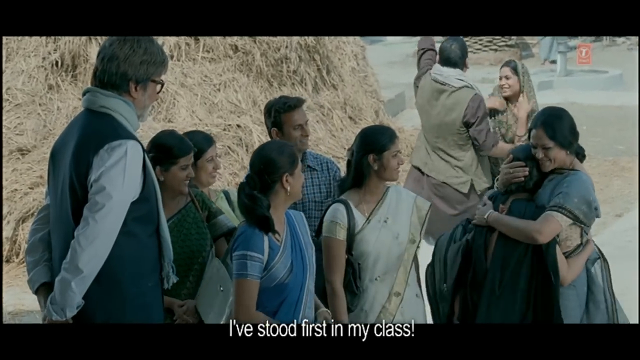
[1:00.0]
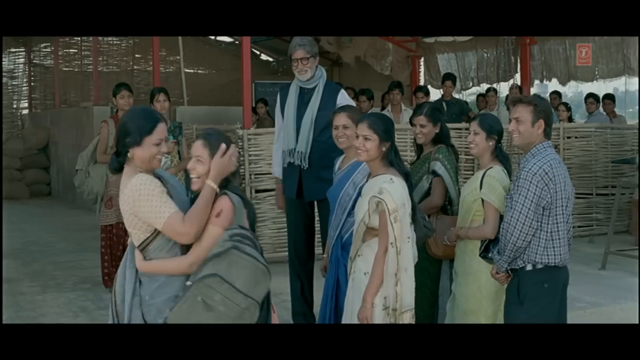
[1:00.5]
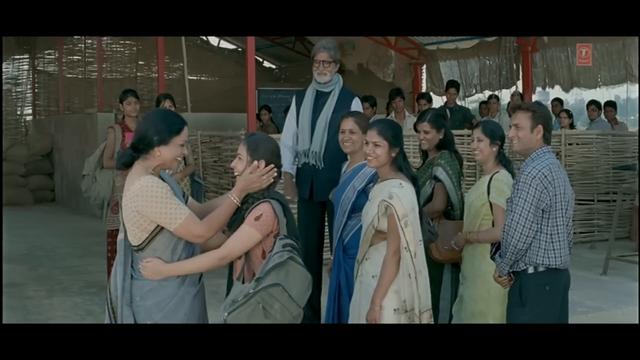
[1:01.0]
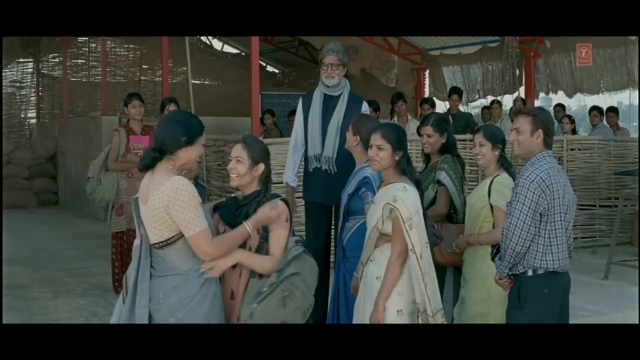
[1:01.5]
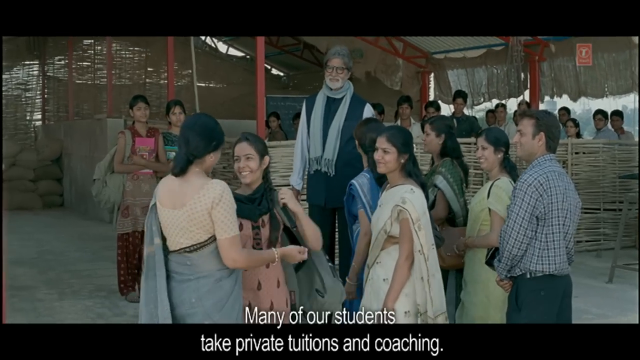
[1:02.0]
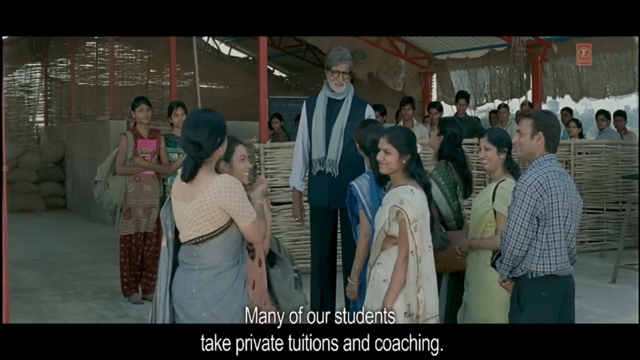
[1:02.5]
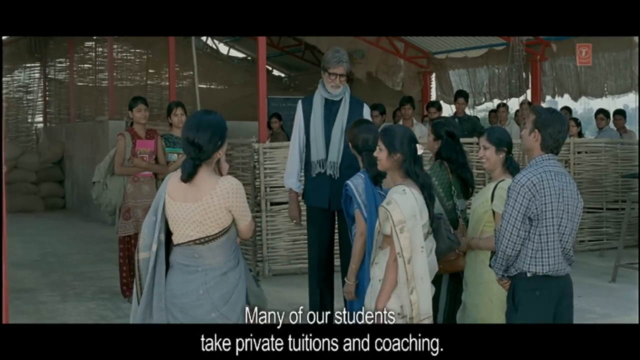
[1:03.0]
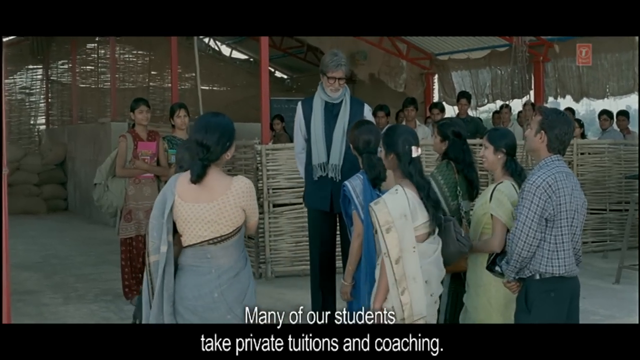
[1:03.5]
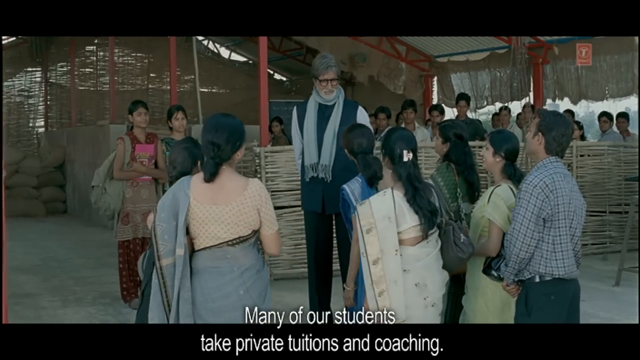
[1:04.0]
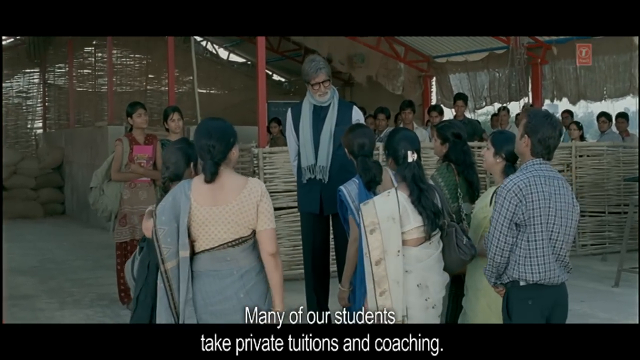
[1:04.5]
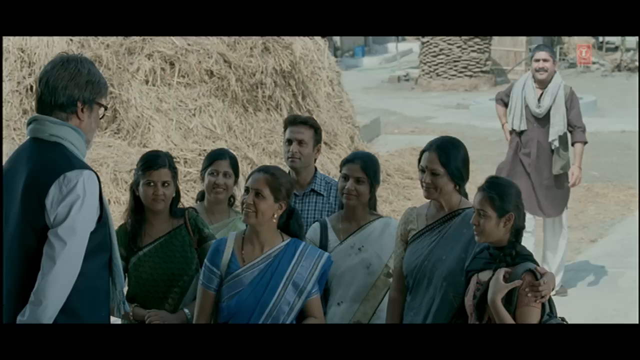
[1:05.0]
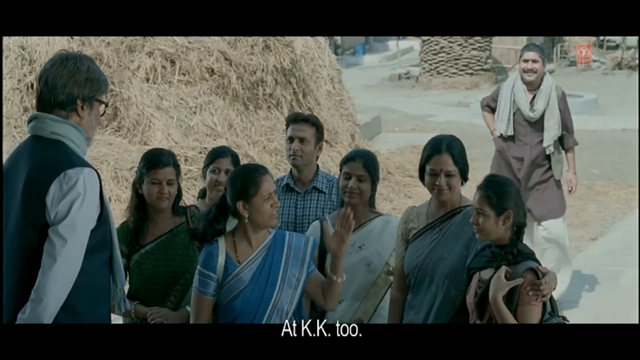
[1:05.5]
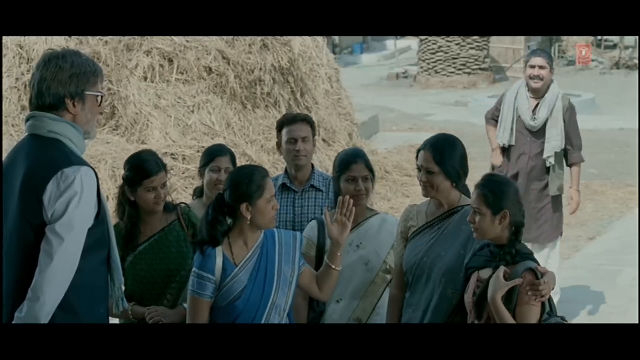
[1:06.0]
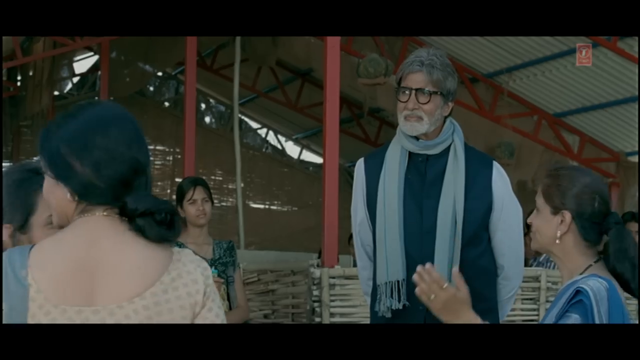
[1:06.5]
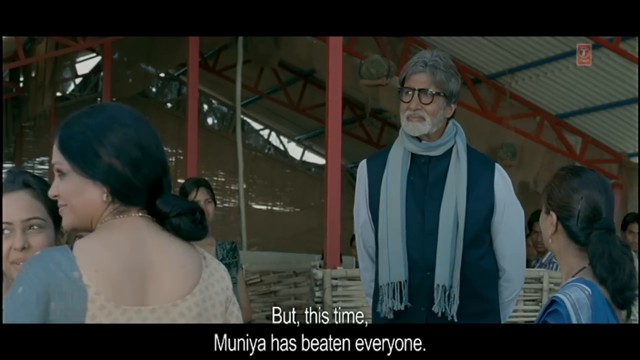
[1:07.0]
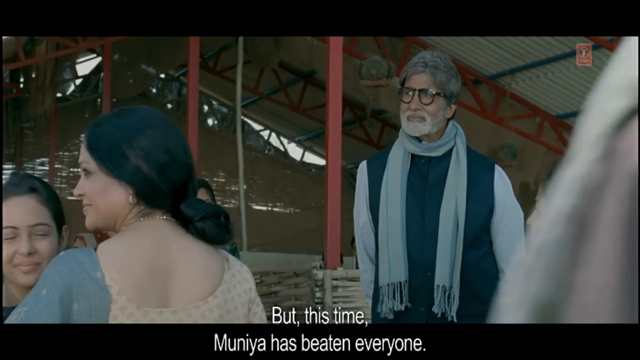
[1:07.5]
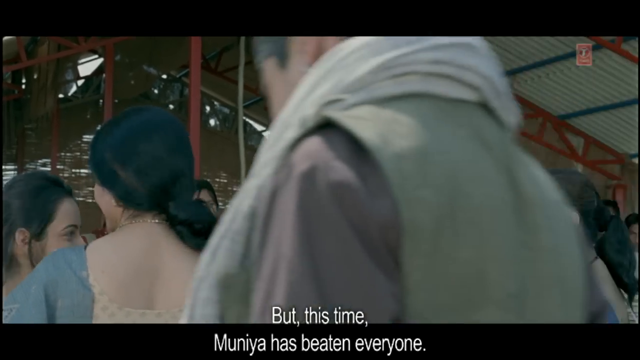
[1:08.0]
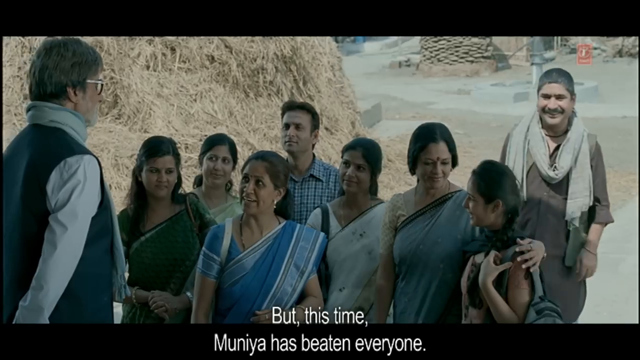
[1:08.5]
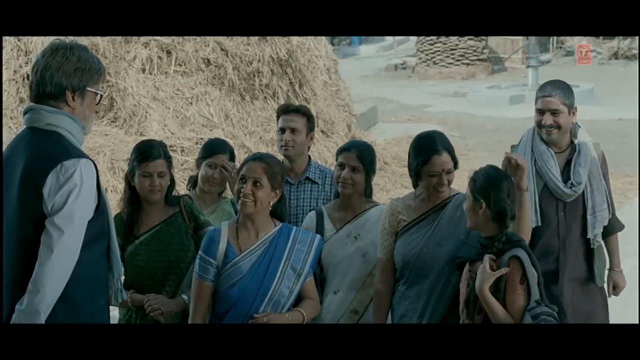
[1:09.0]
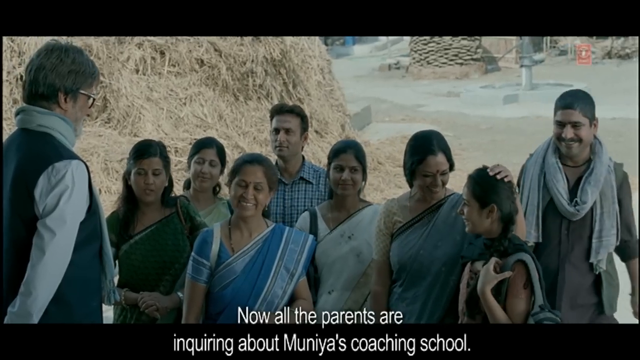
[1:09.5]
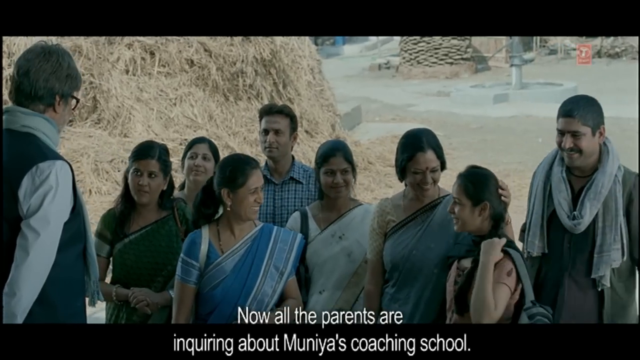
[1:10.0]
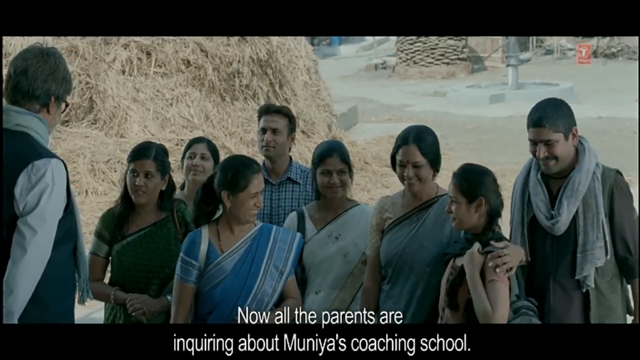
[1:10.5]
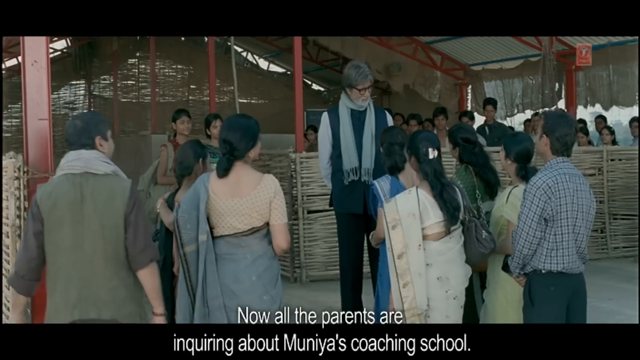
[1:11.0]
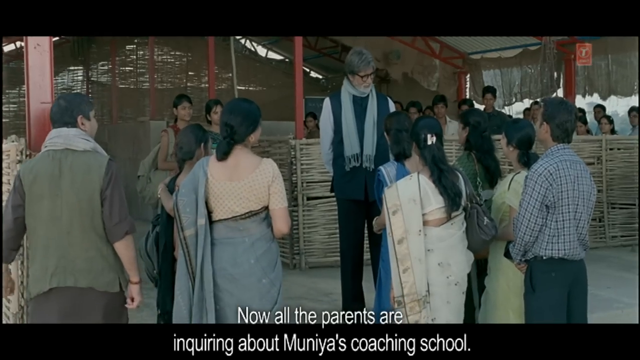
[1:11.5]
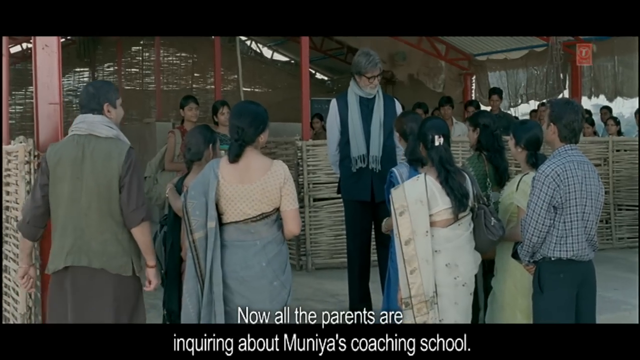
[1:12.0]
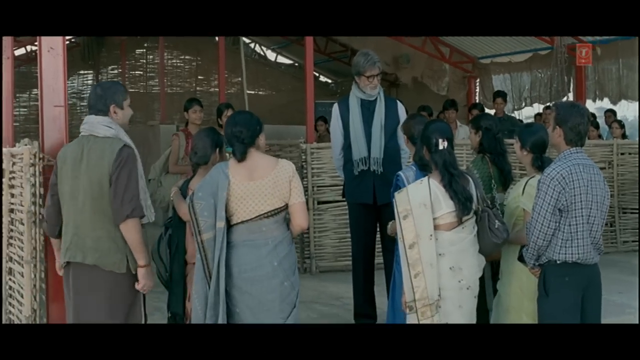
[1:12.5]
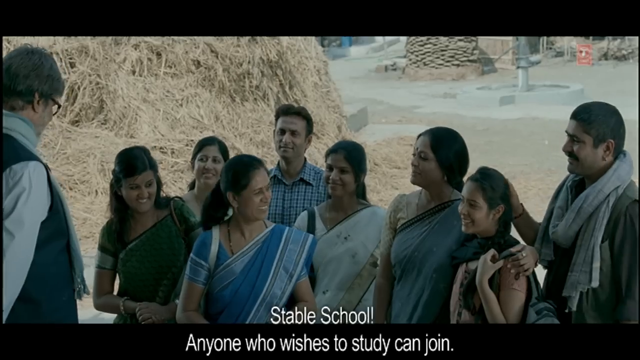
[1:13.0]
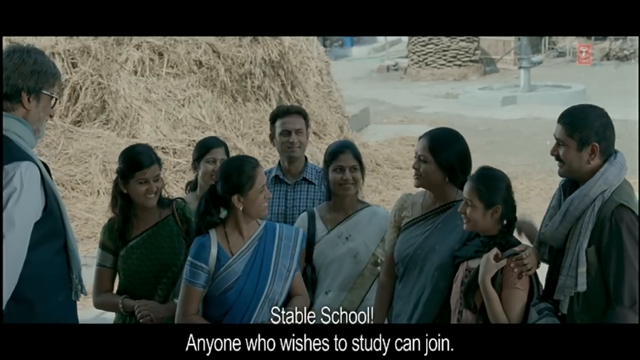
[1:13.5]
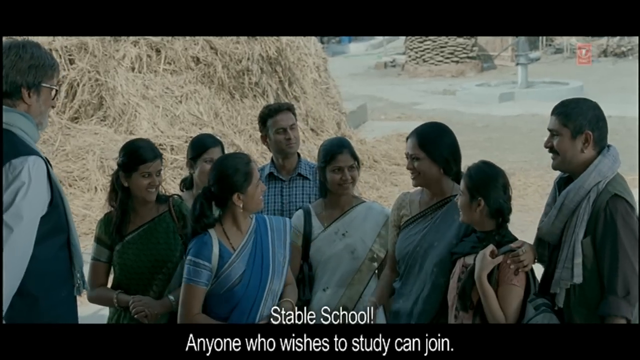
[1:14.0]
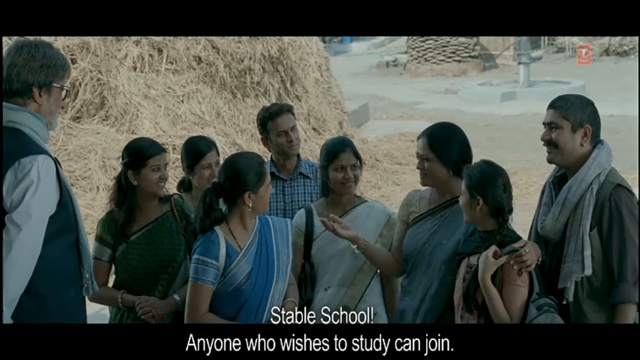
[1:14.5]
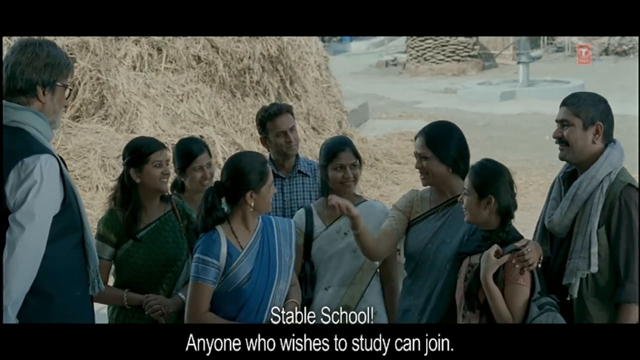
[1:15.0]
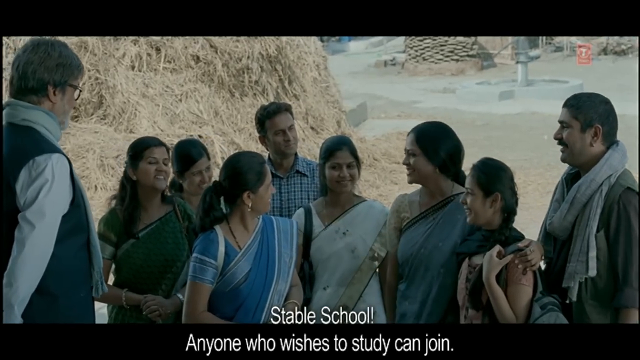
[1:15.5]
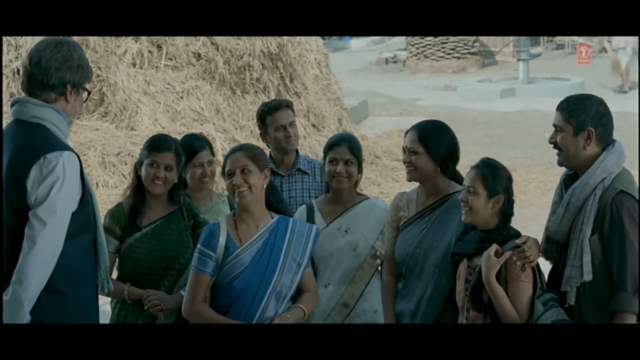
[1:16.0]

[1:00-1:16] After the girl hugs the other woman, everyone stands around staring at the professor. The dad-like man comes back to the group at the edge, smiling. Everyone smiles and stands around the girl, looking up at the professor, who is shockingly tall compared to everyone else and seems like a celebrity of some sort. The class is still standing in the background, also staring at the professor, and two other students in the background hold their books to their chests. The class and students are not really smiling but stand there stoically, while the group that came with the girl, probably her family, relatives and friends, look happy and pleased.